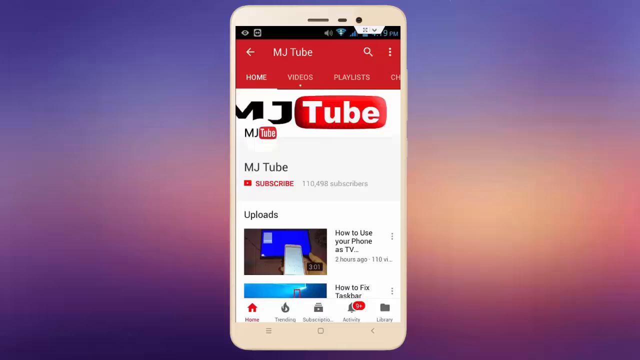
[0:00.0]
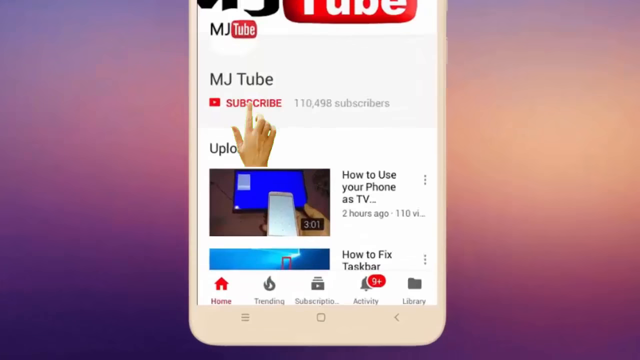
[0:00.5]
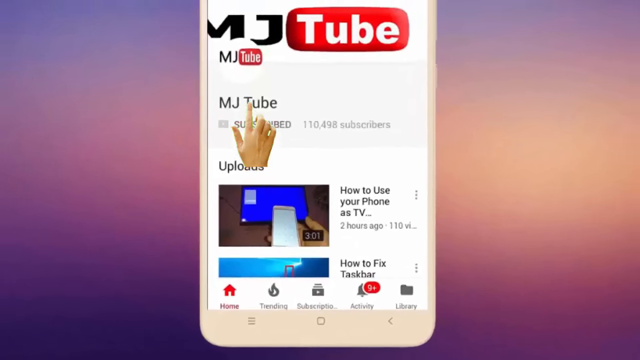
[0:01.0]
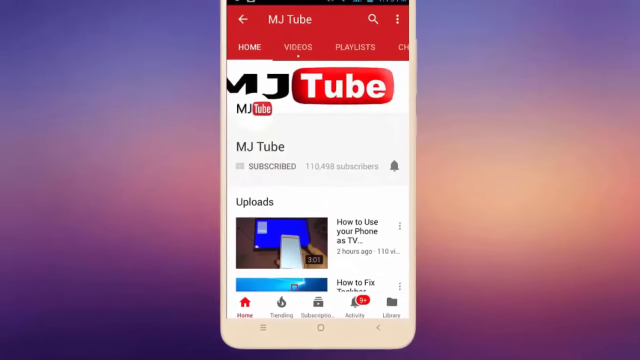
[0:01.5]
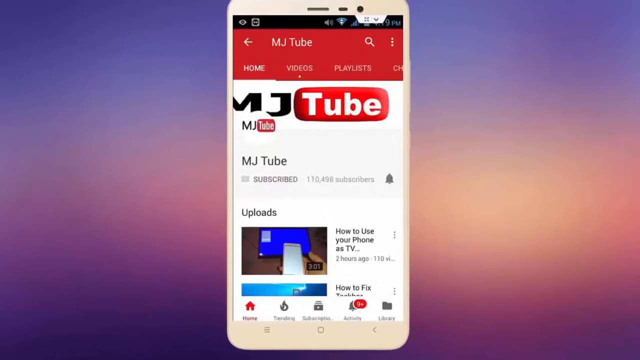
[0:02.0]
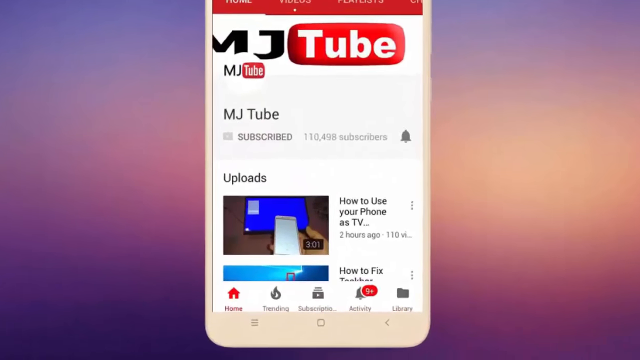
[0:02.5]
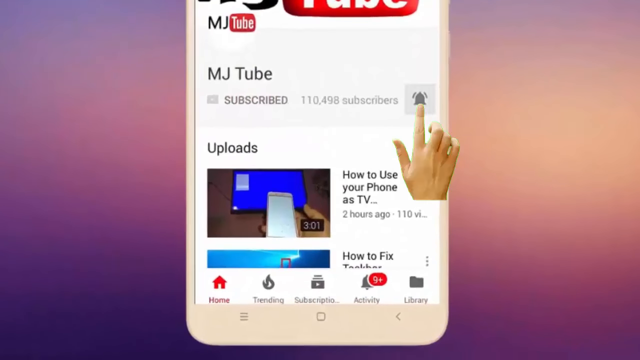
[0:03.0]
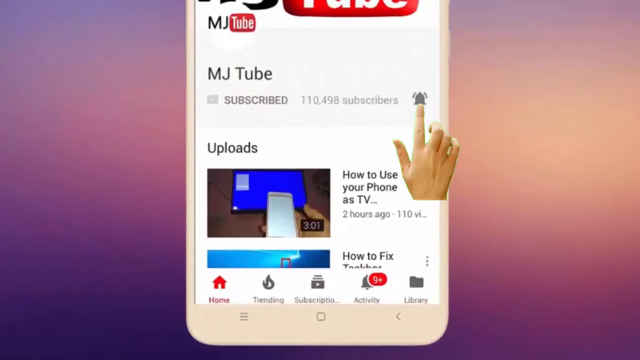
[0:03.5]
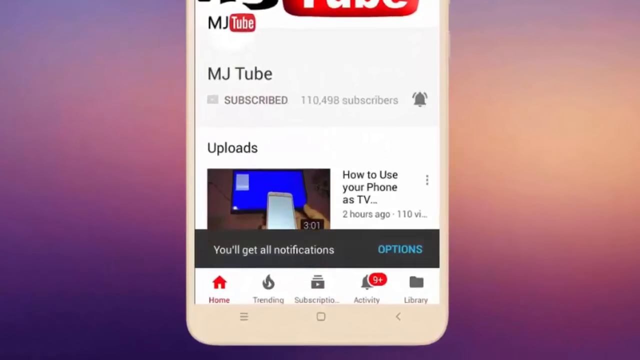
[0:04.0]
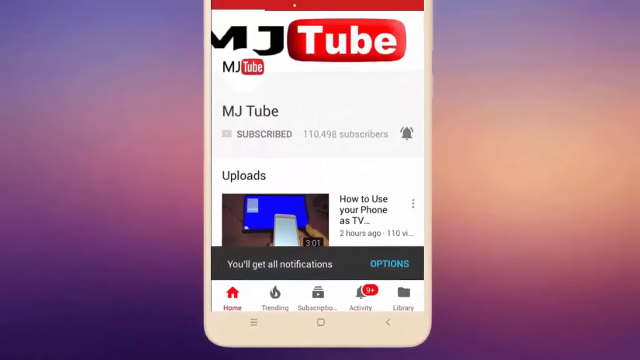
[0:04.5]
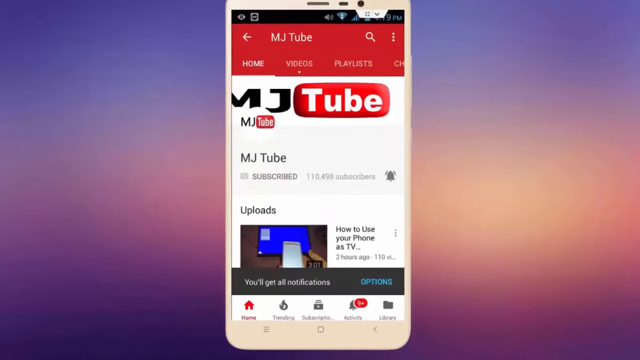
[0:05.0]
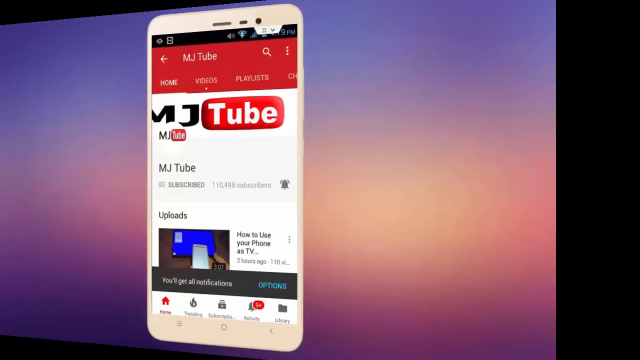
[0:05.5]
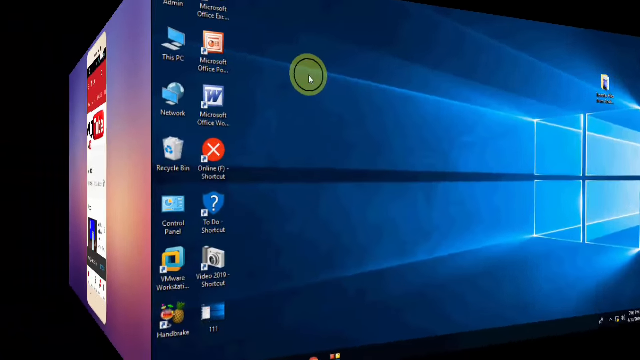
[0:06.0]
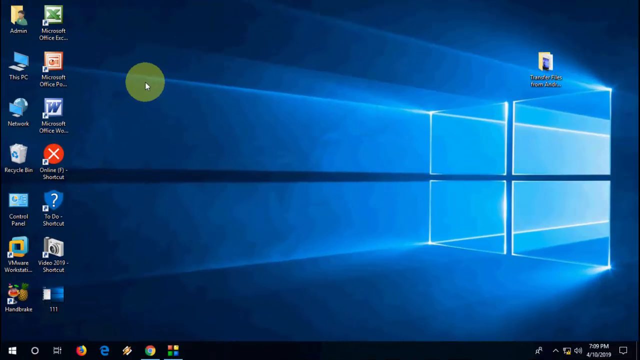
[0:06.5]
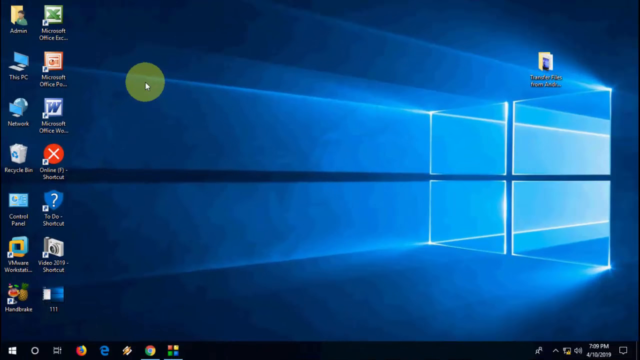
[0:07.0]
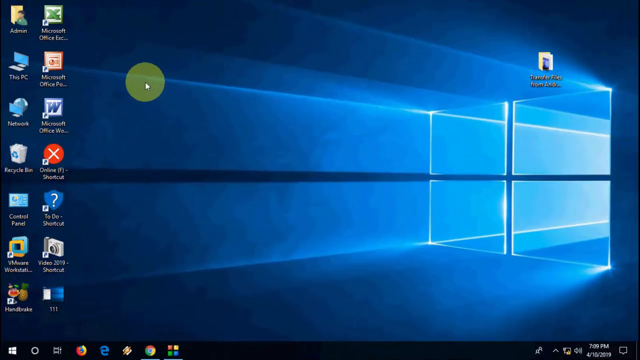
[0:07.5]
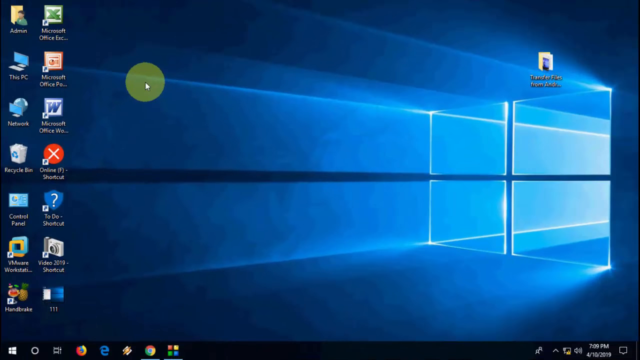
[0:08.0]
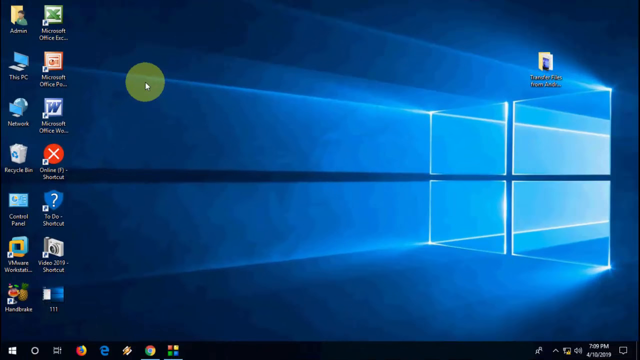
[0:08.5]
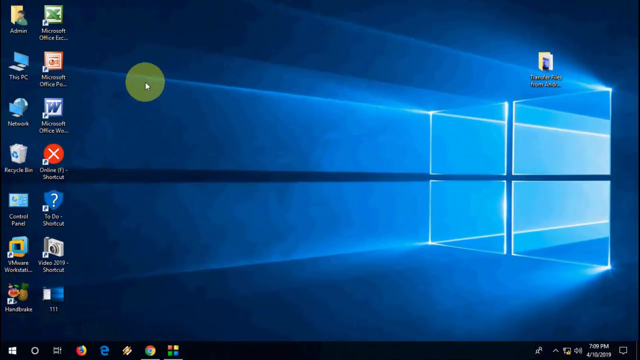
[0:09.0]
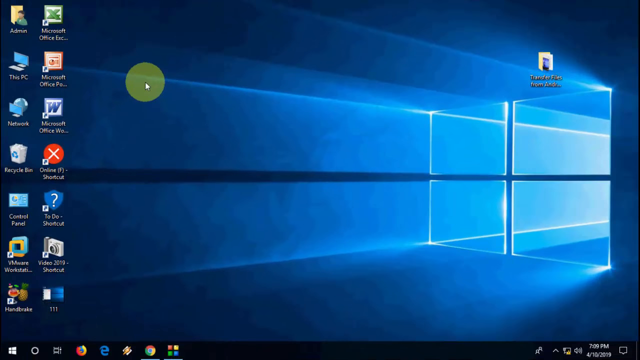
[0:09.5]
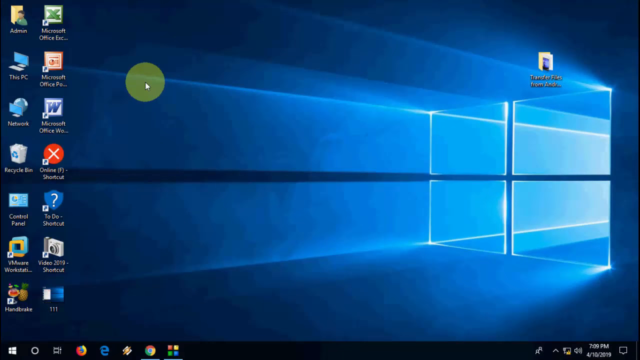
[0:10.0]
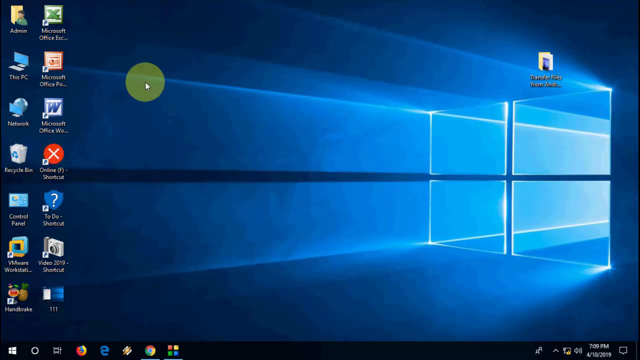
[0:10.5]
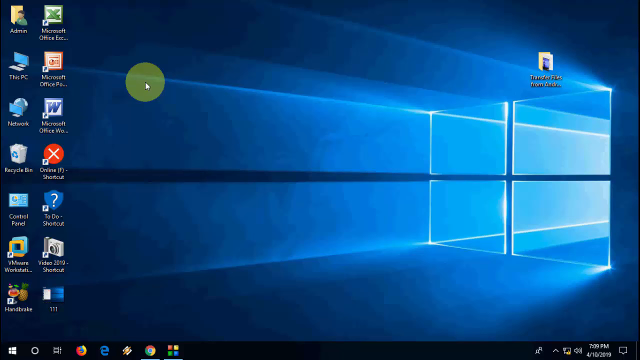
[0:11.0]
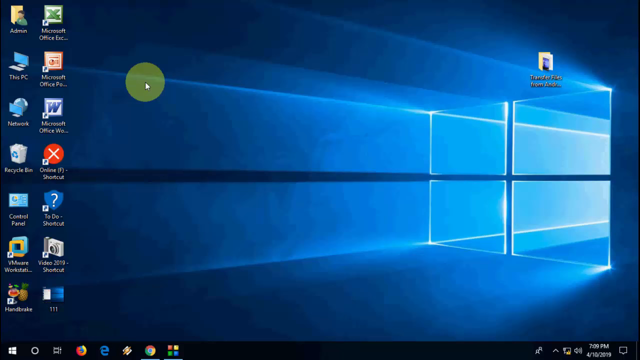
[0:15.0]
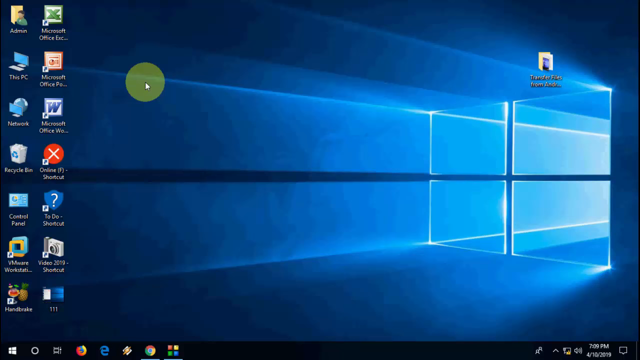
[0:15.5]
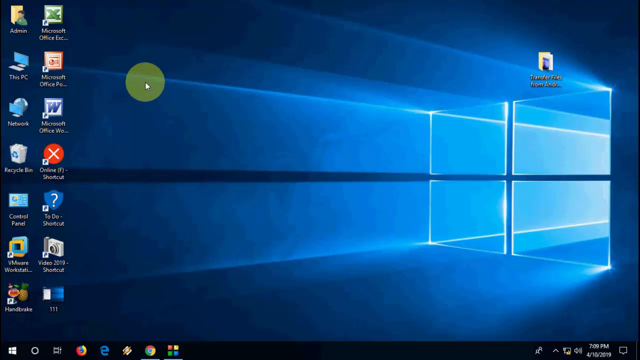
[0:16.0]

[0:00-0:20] The video opens on an amber and lavender background. Over it, in the middle, is an image of the front of a smartphone with its screen open to a web page for an app named MJTube, which looks very similar to YouTube's home page. There is a subscribe option, and the app shows 110,000 subscribers. Two how-to videos are visible: the first is "how to use your phone as TV" and the second is "how to task bar." Tabs run along the bottom: the home tab, which is the current page, is red; to its right is trending with its logo, then subscriptions with its logo, then activity with its logo and a nine-plus count, and the last is library. The app's border is red and its body is white. The video then transitions to the steel and light blue Windows screensaver with the Windows logo on the desktop of a PC.